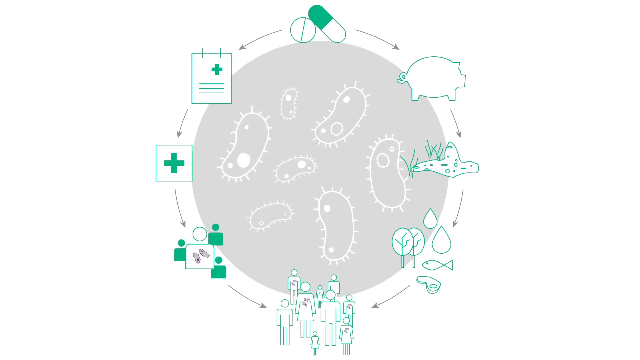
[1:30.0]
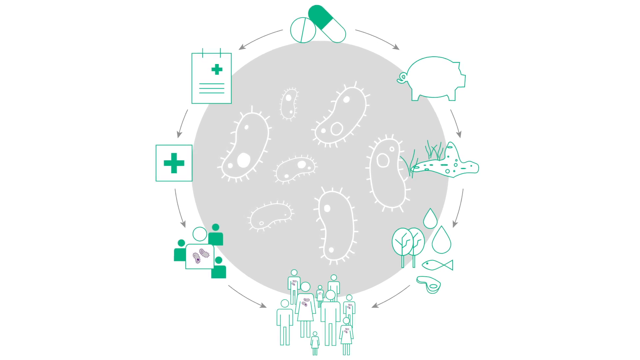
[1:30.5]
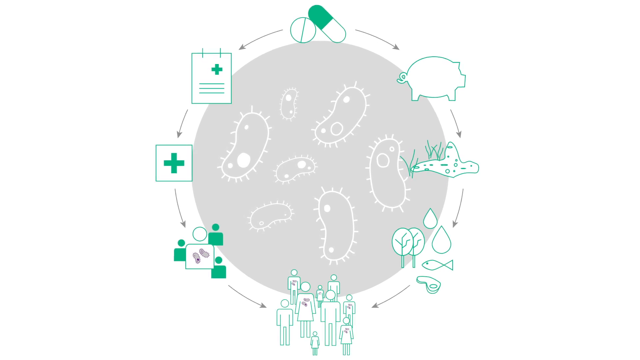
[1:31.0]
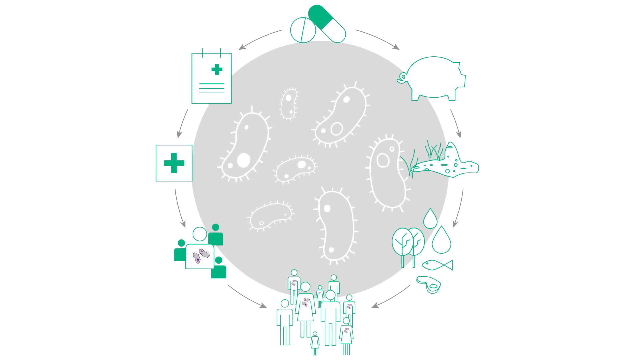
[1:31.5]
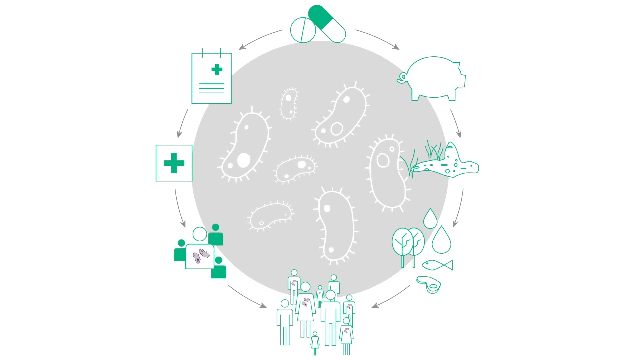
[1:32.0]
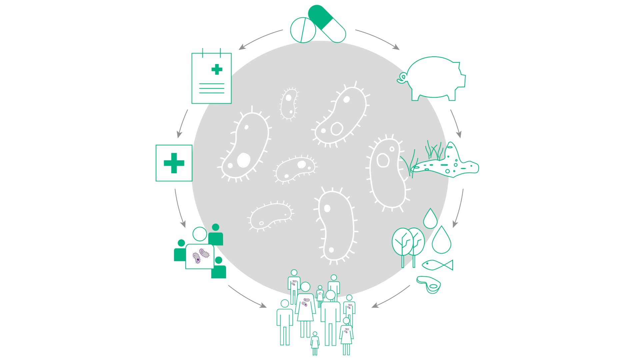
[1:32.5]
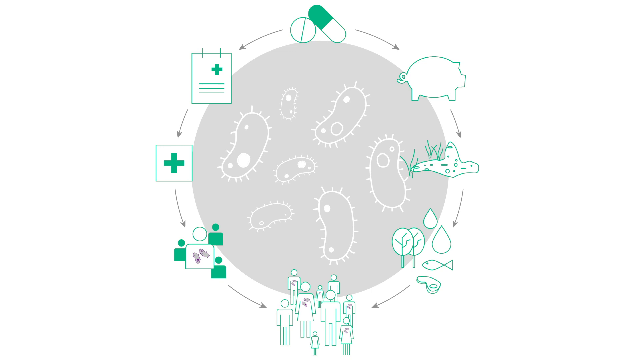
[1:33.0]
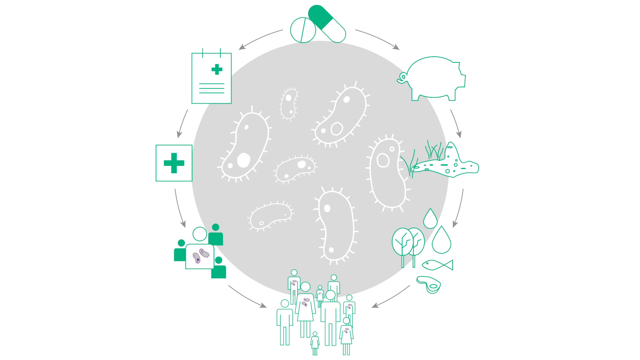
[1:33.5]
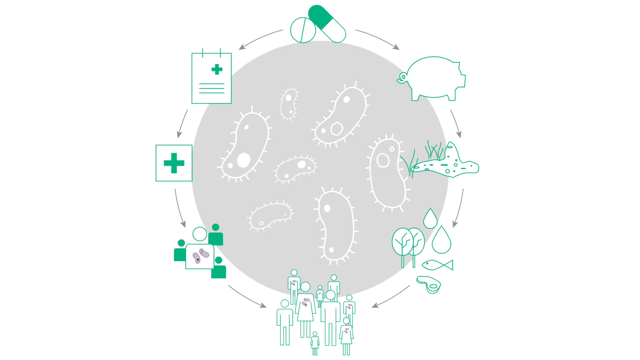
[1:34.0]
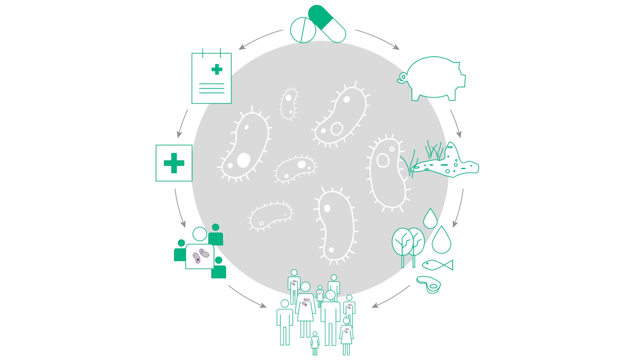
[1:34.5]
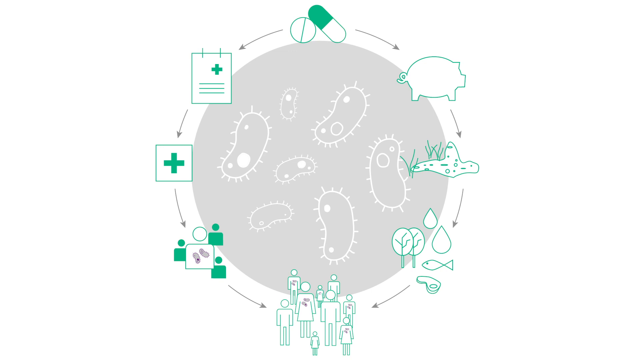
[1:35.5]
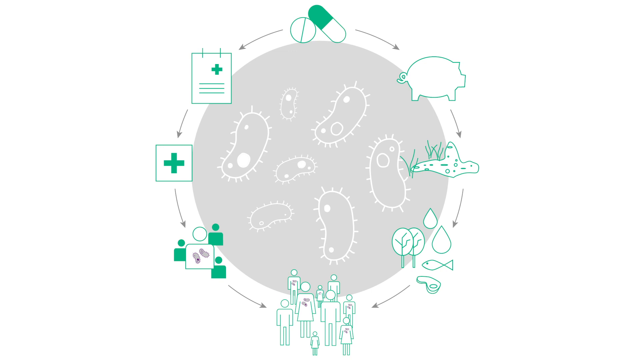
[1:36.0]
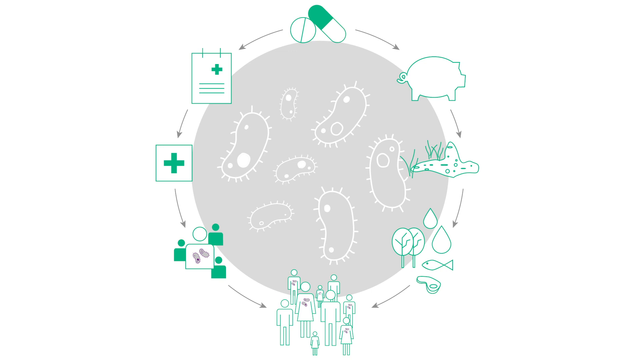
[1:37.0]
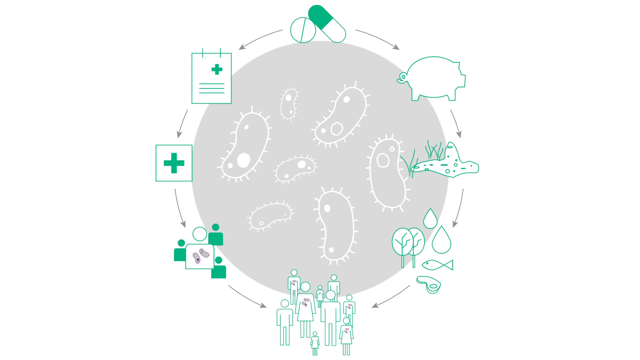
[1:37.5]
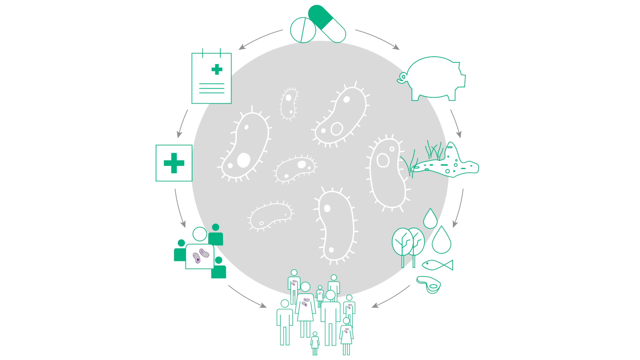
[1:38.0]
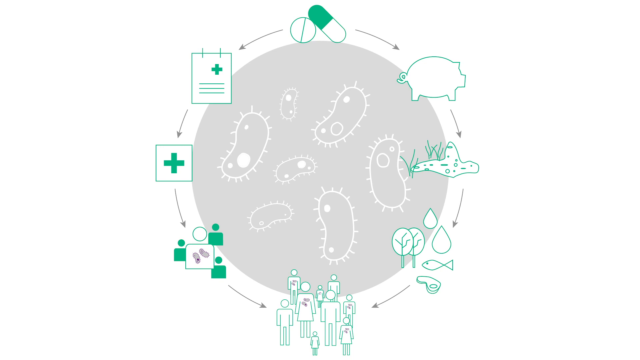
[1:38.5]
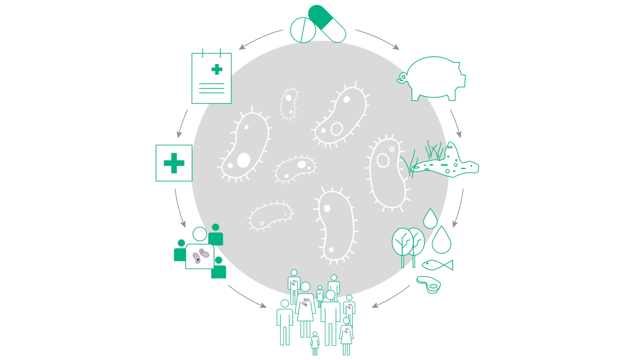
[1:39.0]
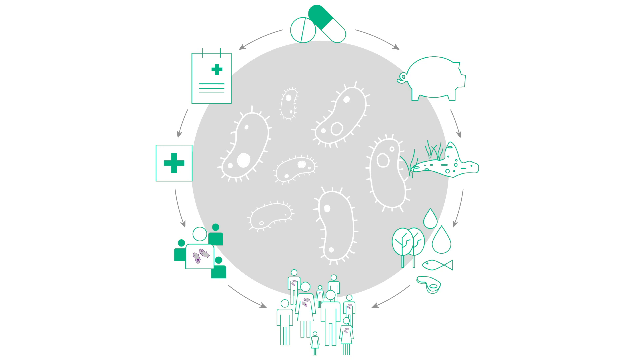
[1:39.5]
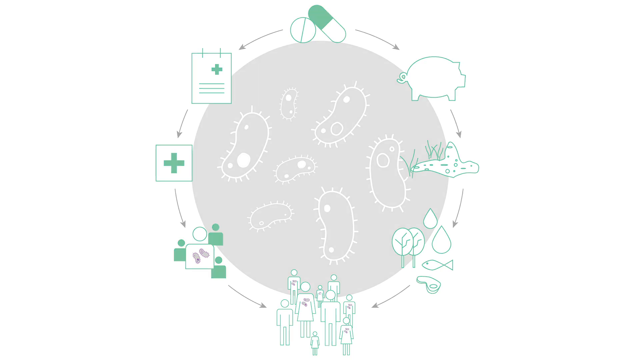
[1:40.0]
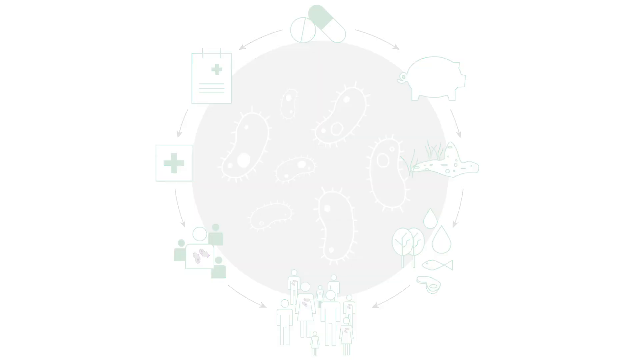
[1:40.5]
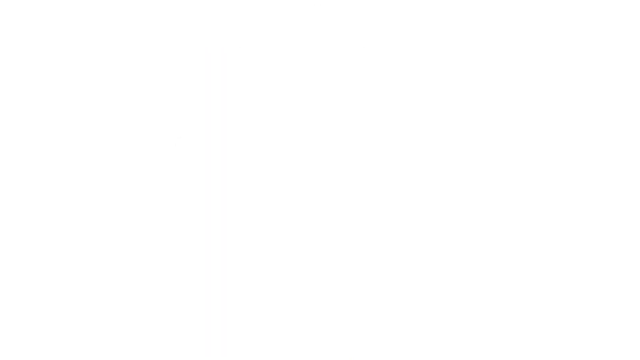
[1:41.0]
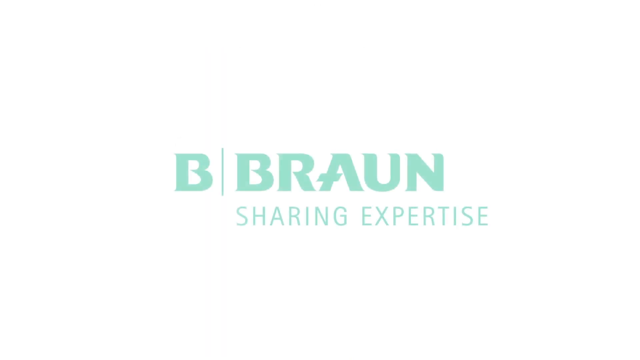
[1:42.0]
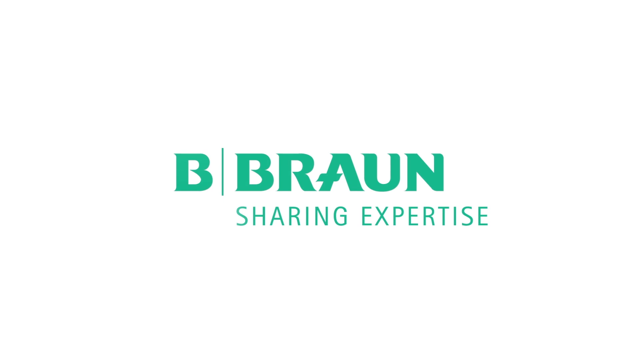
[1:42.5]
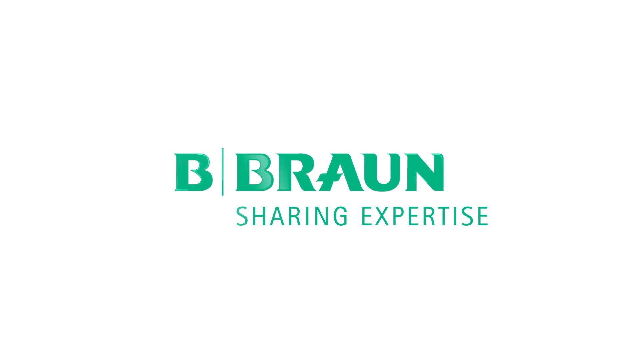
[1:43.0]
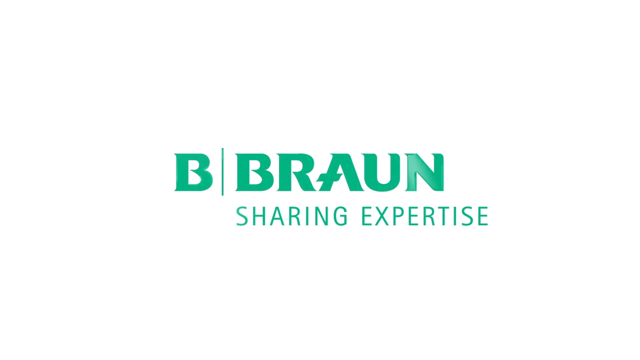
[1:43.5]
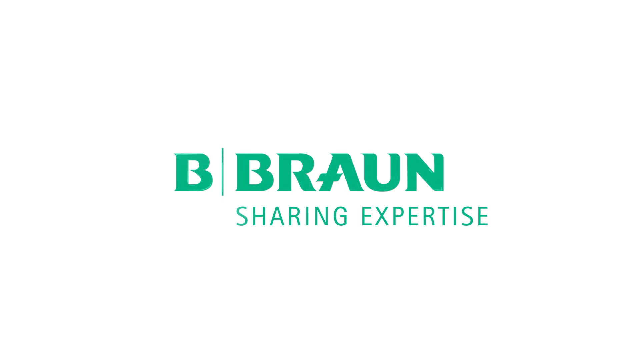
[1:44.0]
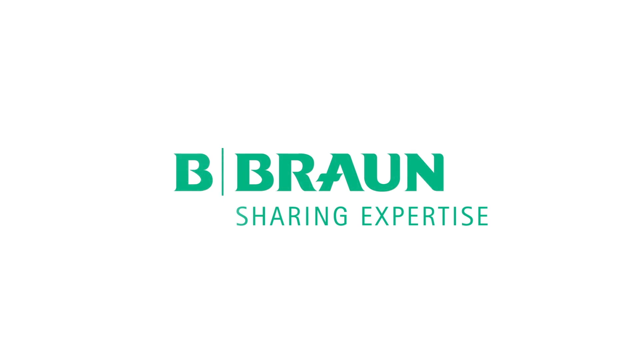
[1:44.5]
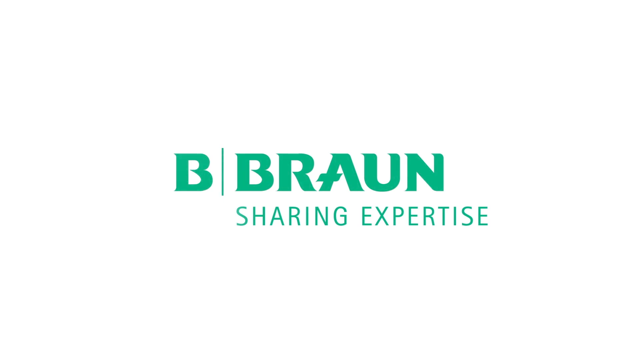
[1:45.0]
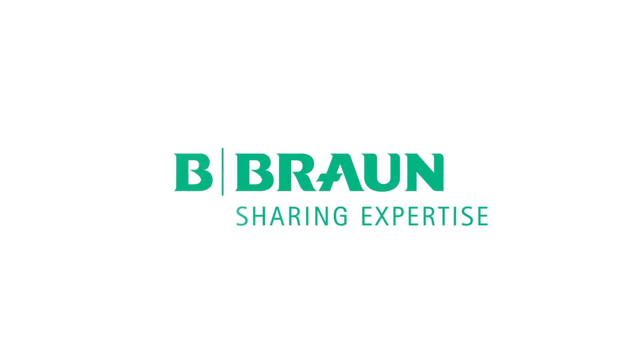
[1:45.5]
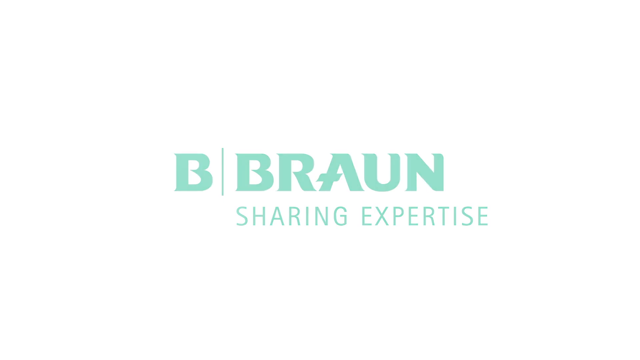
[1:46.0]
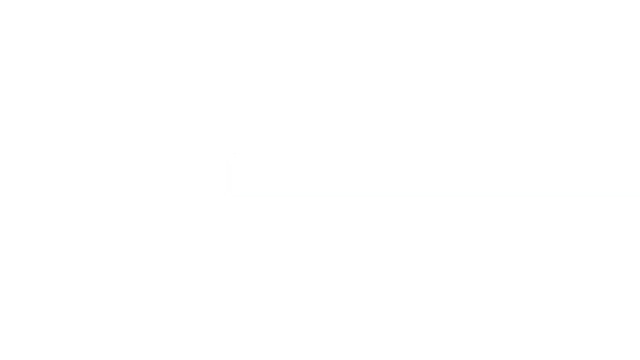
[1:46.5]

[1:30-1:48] The shape forms into a circle with all the things together in it. Medicines appear, a tablet and a capsule, and after that a plus sign and a minus sign. Some bacteria and other things appear, then a human body, and after that the body affected by the bacteria. Many things are shown together in the circle.